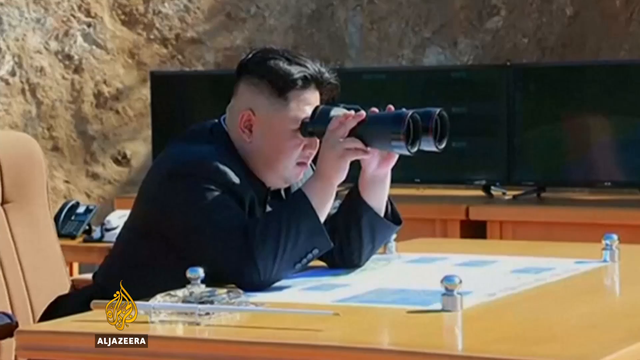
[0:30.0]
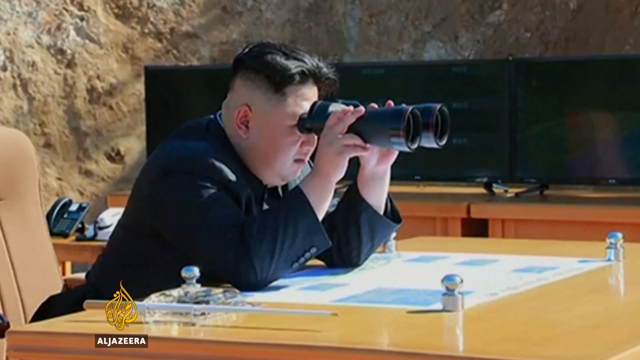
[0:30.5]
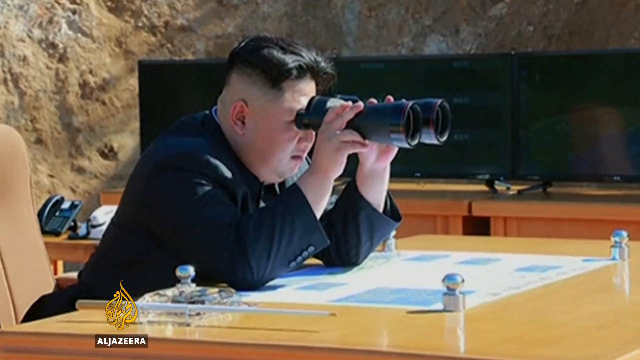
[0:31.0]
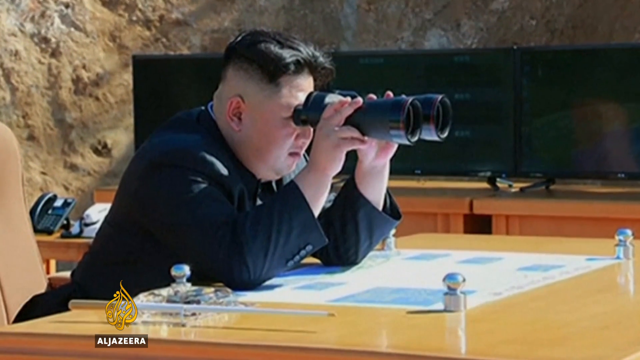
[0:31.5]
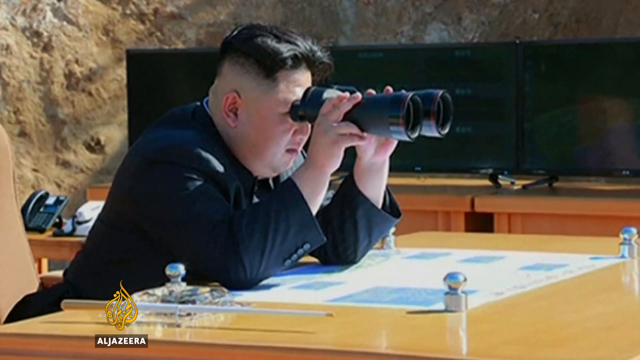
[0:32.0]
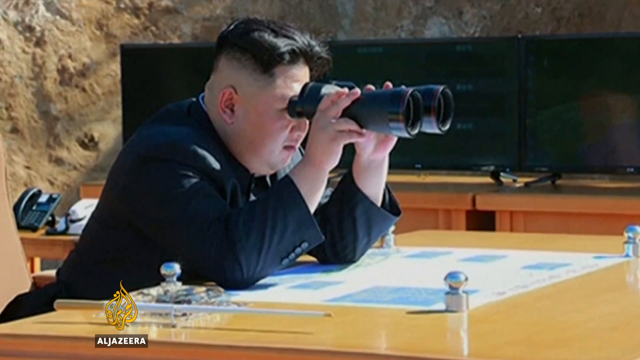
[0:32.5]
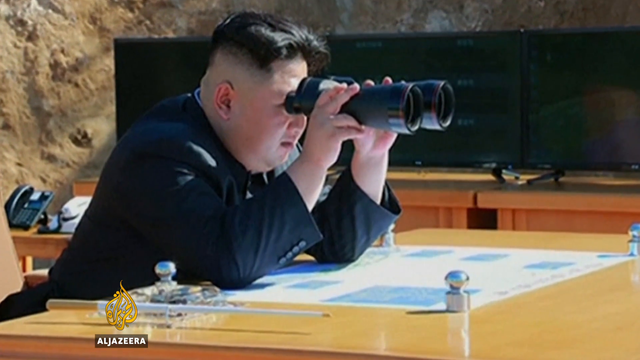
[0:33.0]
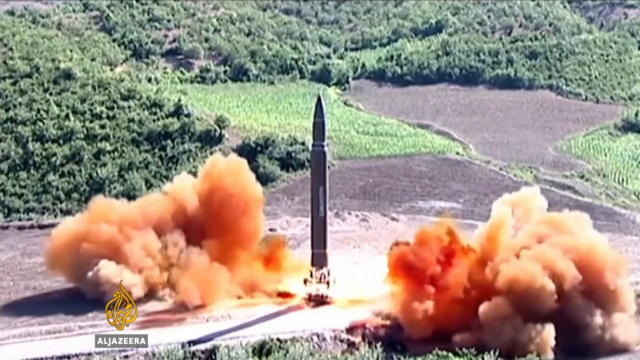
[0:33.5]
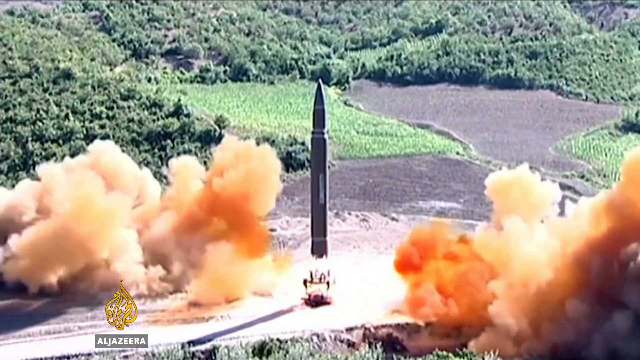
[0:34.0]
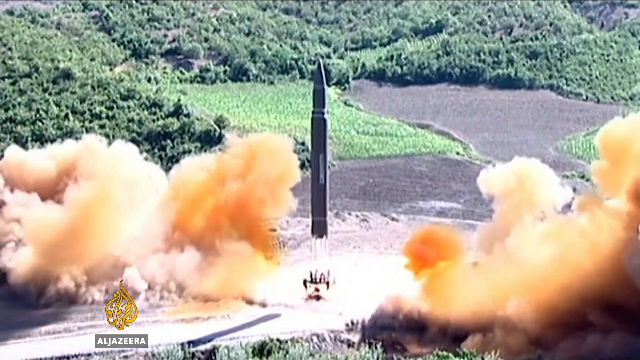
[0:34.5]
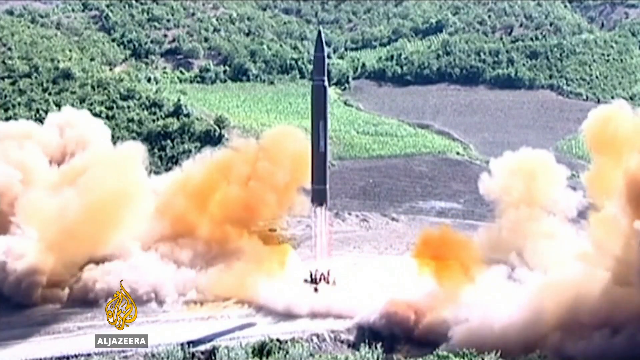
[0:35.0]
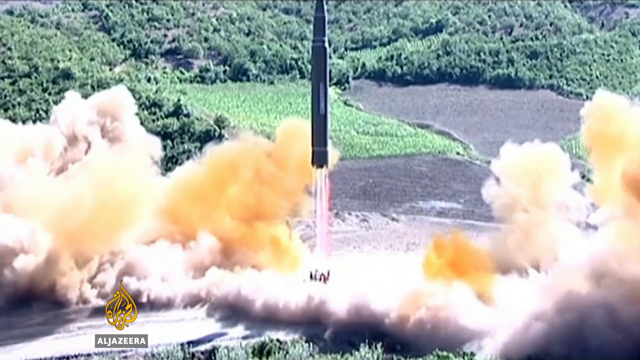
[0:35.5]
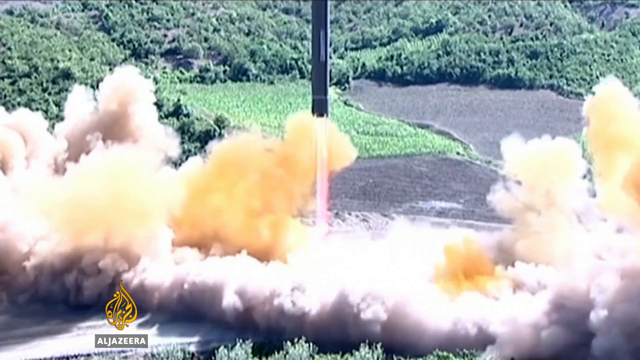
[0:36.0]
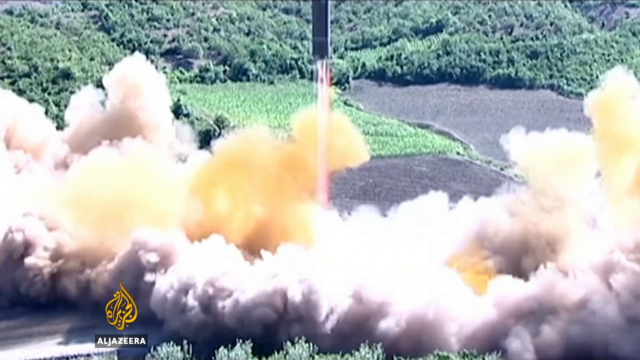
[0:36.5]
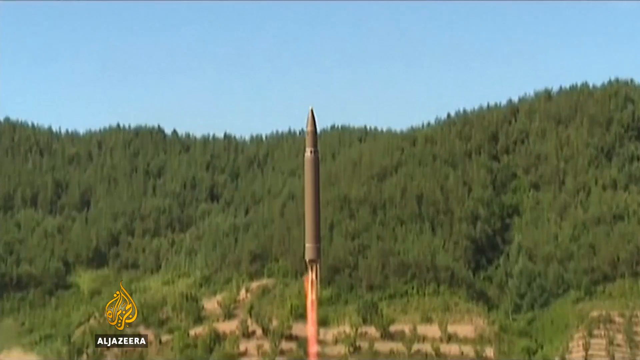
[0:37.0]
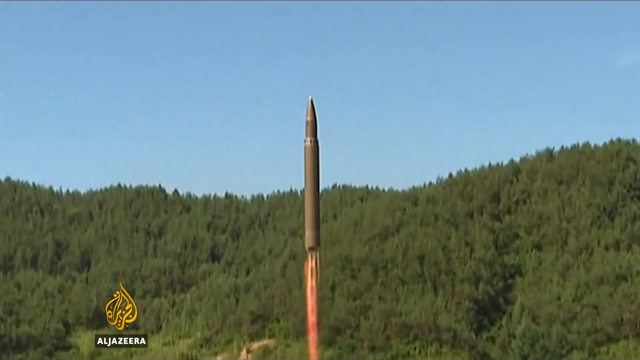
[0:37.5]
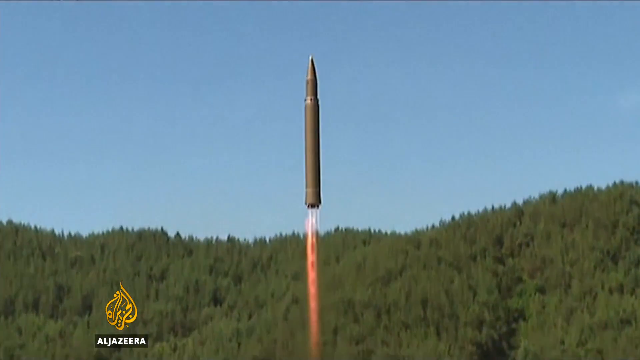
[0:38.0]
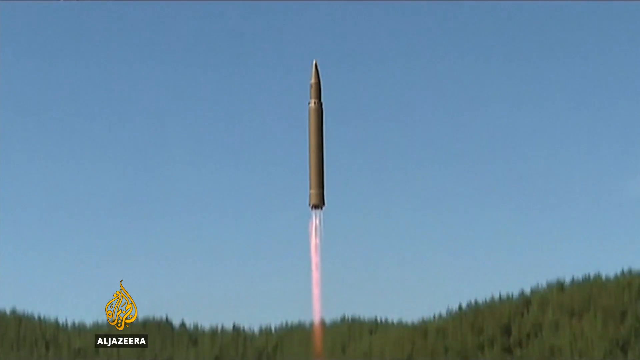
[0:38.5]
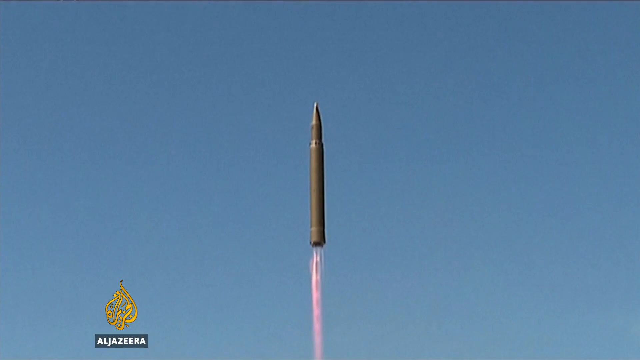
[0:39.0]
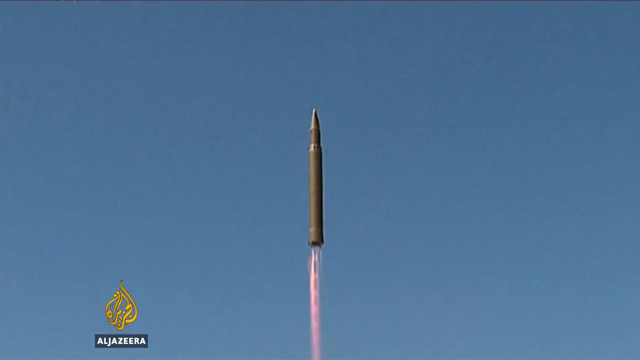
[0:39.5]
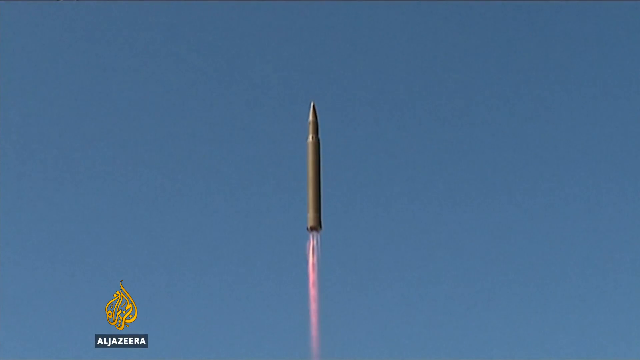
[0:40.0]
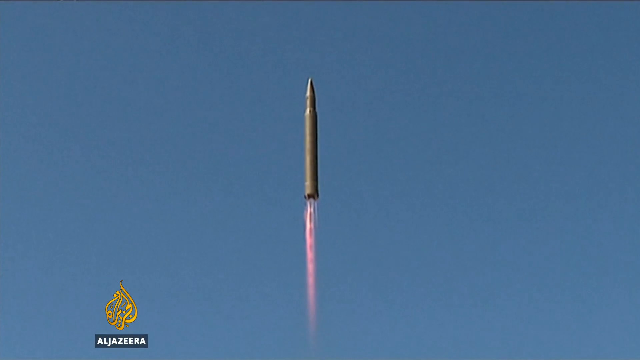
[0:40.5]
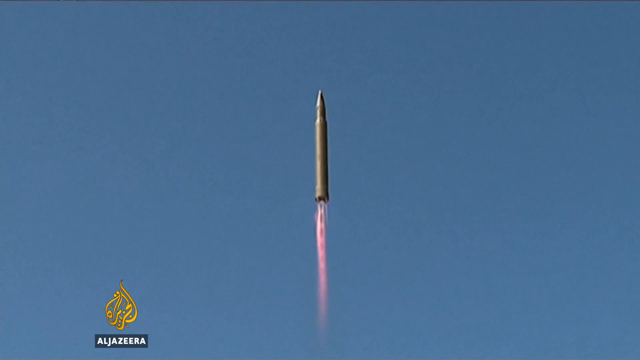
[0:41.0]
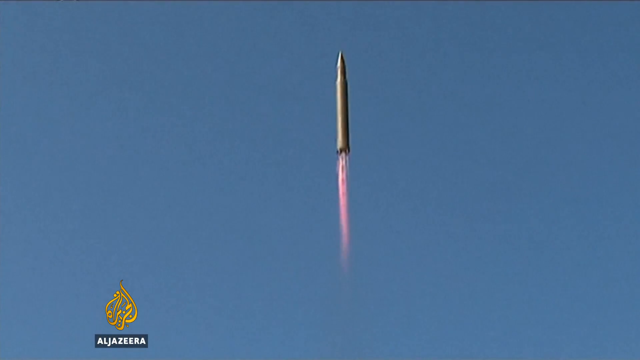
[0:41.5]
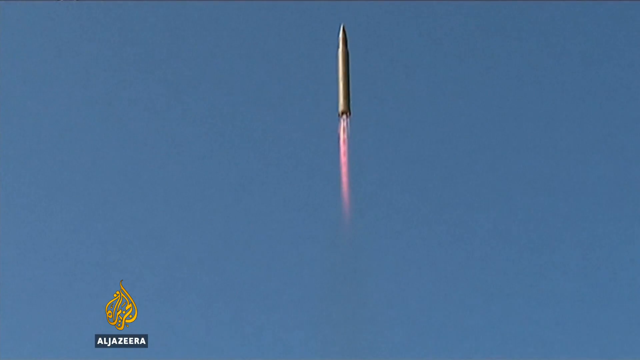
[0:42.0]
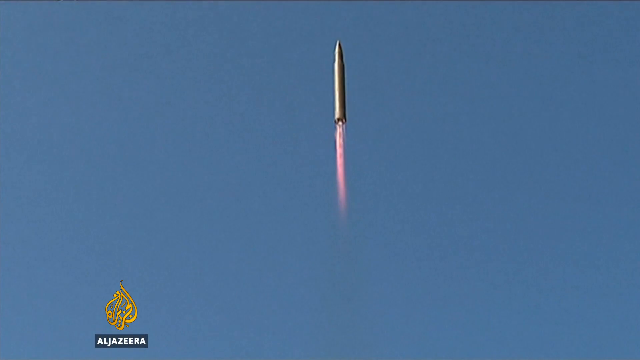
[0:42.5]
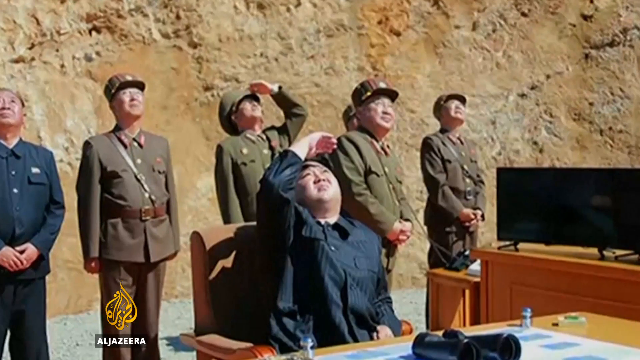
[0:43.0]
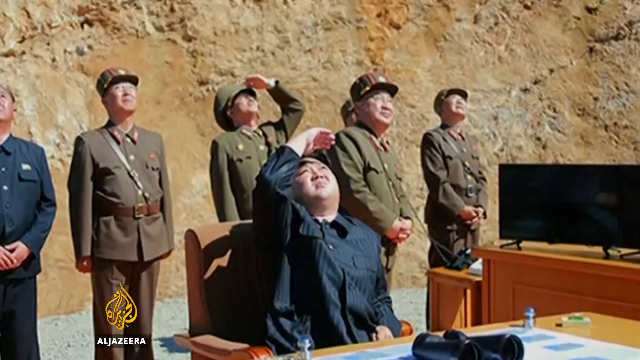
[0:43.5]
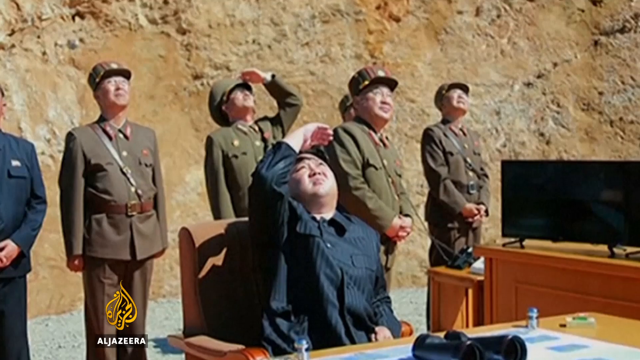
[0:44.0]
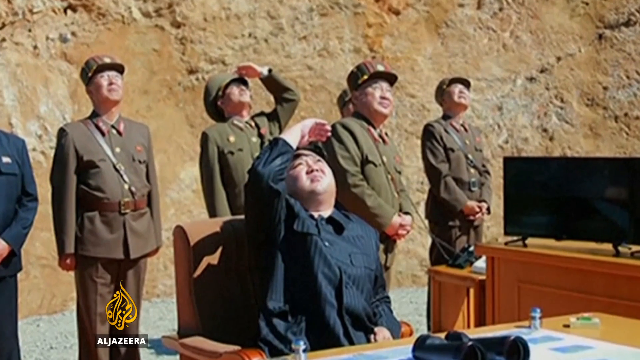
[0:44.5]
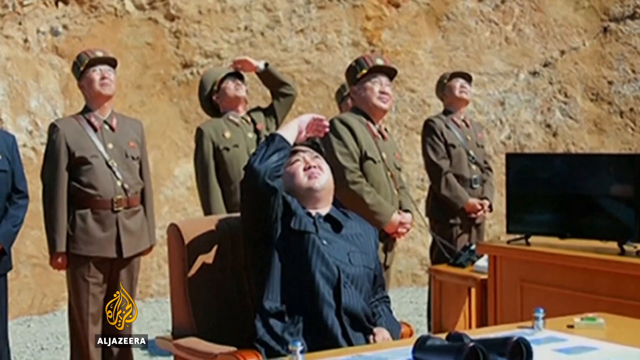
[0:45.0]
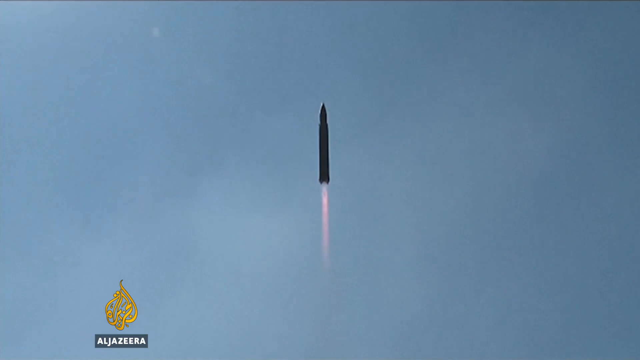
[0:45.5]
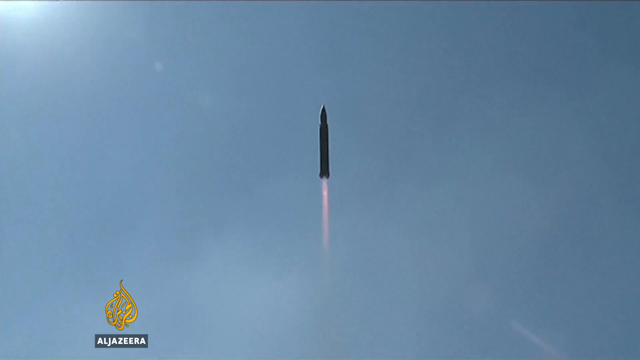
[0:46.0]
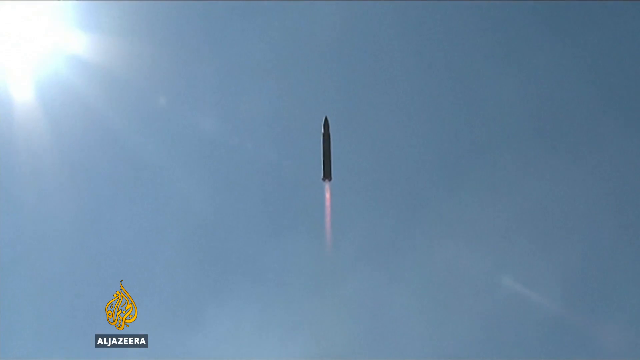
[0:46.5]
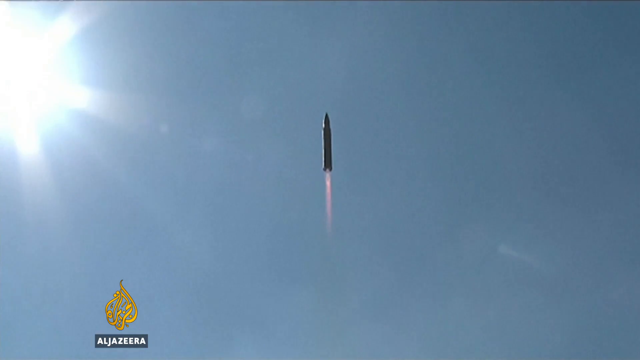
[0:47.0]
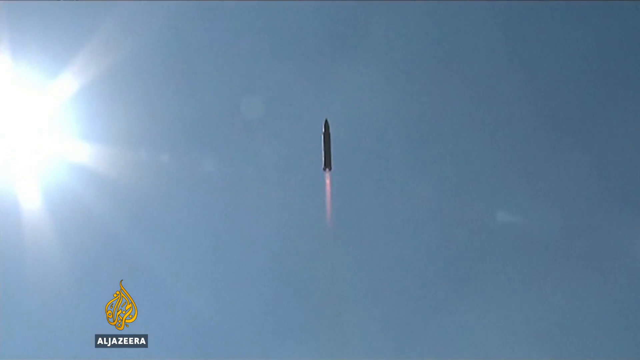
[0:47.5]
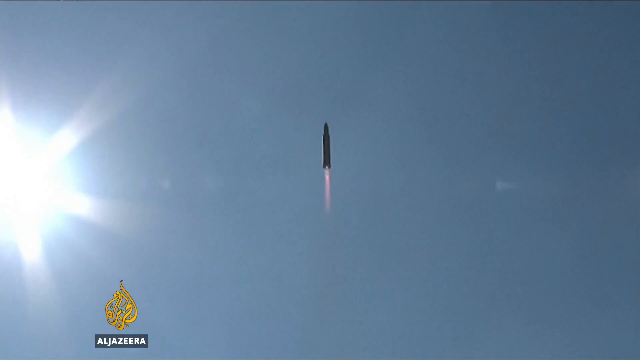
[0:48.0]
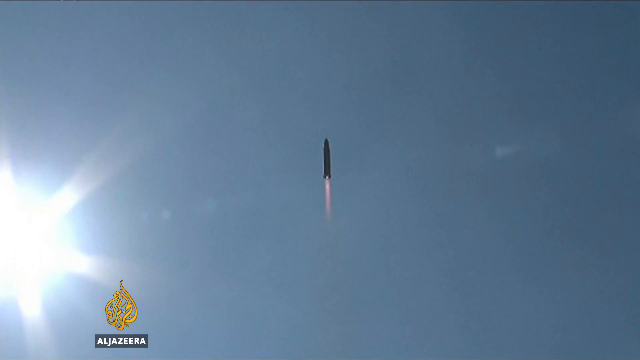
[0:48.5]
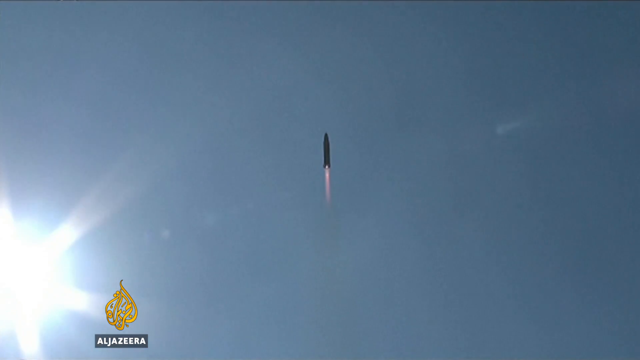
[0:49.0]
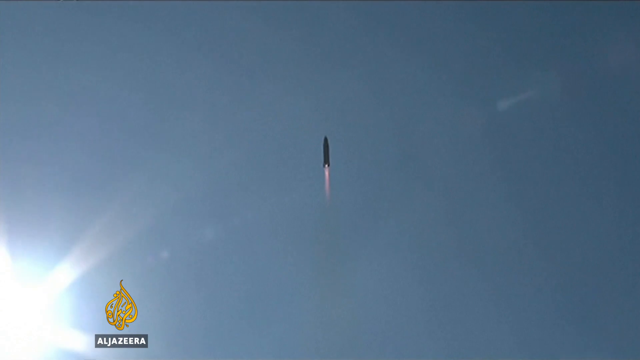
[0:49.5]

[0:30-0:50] A man watches through binoculars while sitting on a brown chair; on the table there appears to be a chart. A rocket launches from the ground, leaving huge dust, with trees and grass around. It rises into the sky on a clear blue day and continues going up as about five men watch from the ground. Five of the men wear brown army uniforms and brown hats and are standing, while one man in a suit is sitting down with his hand on his forehead, shielding his eyes from the sun. There is also a TV they are watching from.